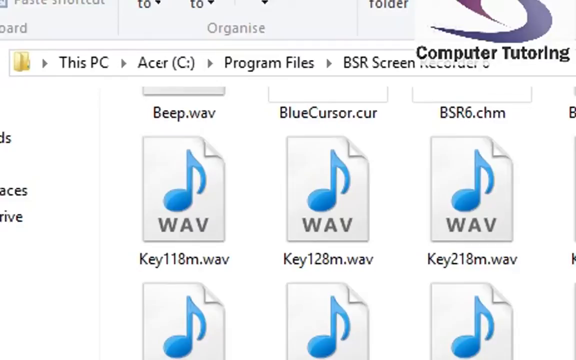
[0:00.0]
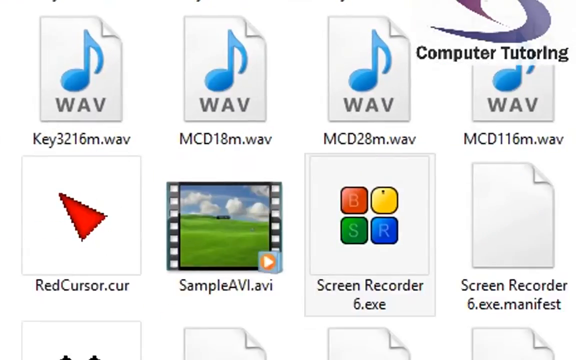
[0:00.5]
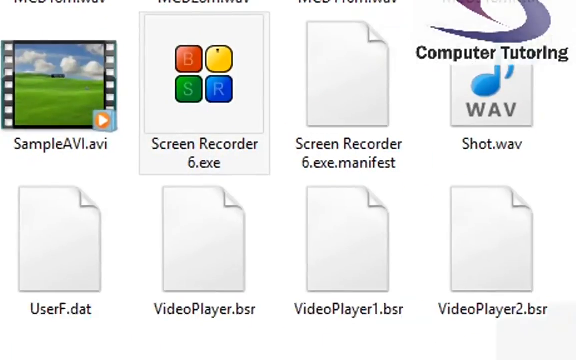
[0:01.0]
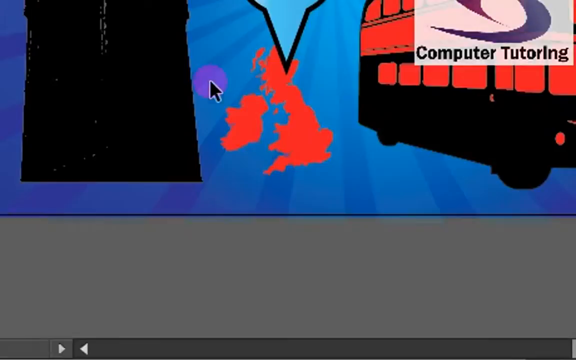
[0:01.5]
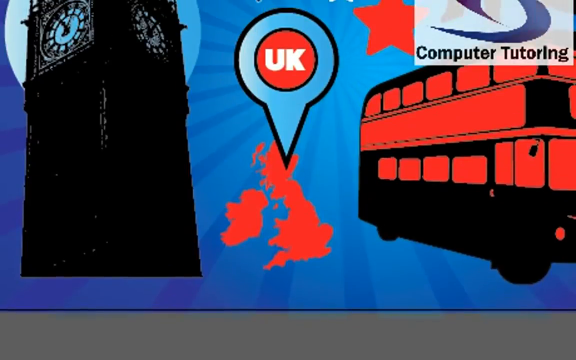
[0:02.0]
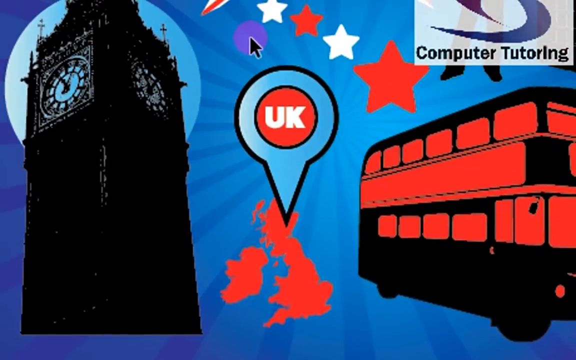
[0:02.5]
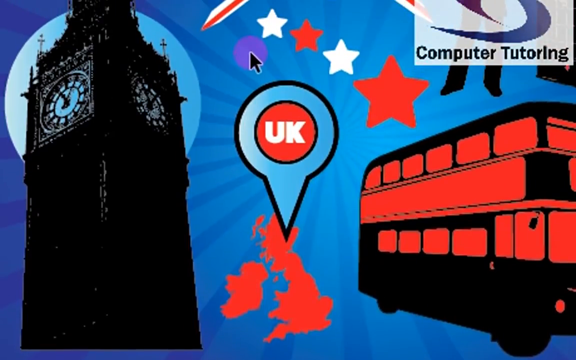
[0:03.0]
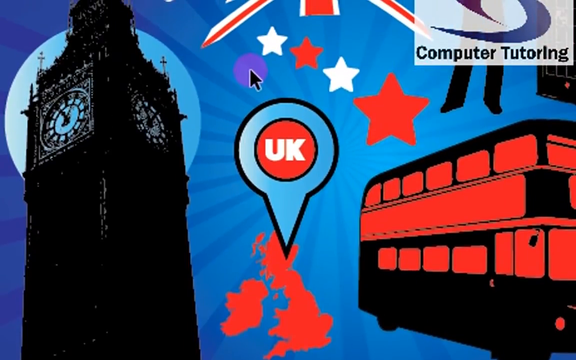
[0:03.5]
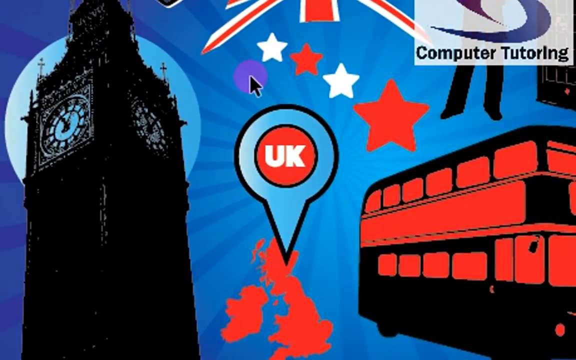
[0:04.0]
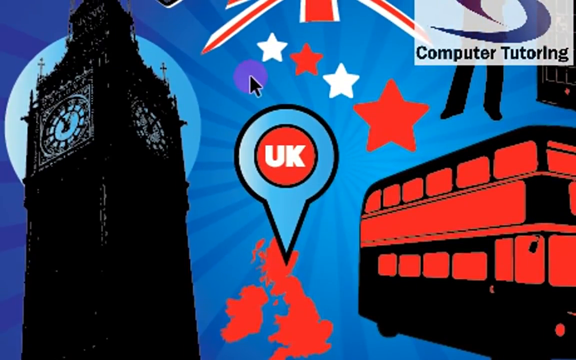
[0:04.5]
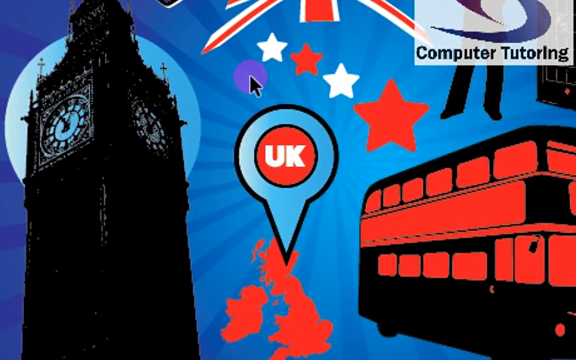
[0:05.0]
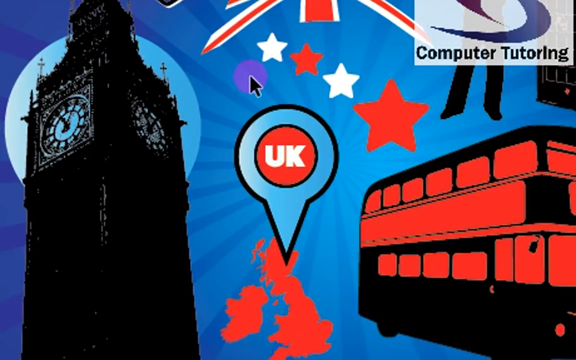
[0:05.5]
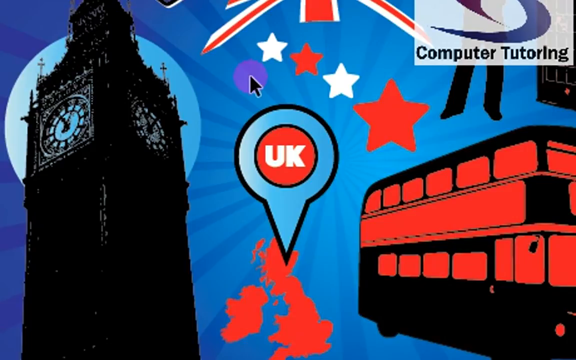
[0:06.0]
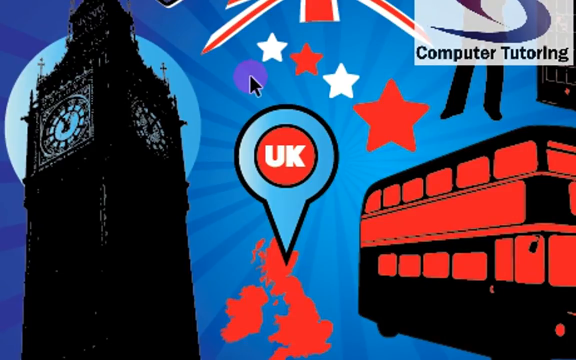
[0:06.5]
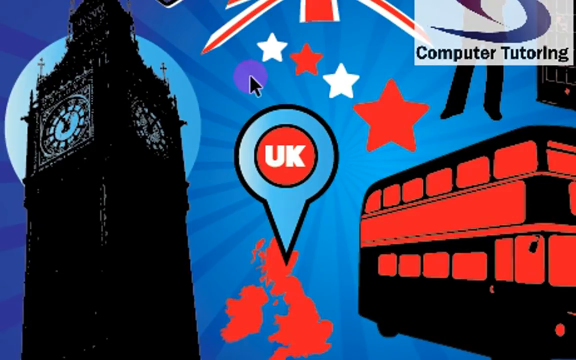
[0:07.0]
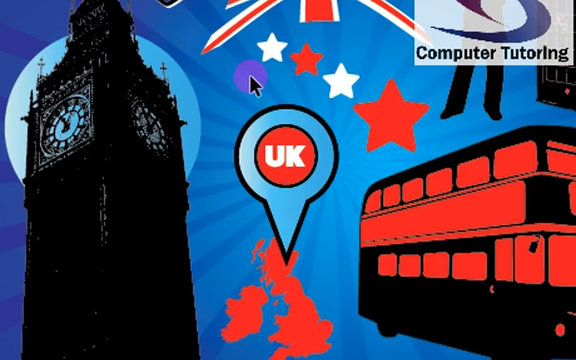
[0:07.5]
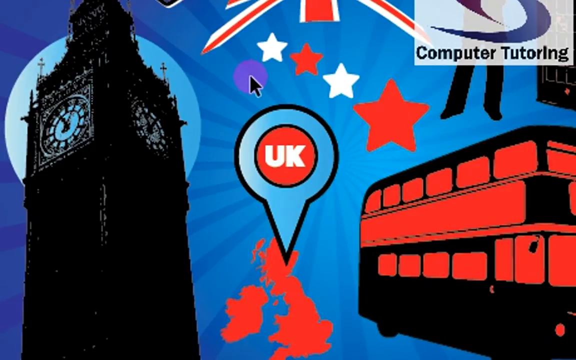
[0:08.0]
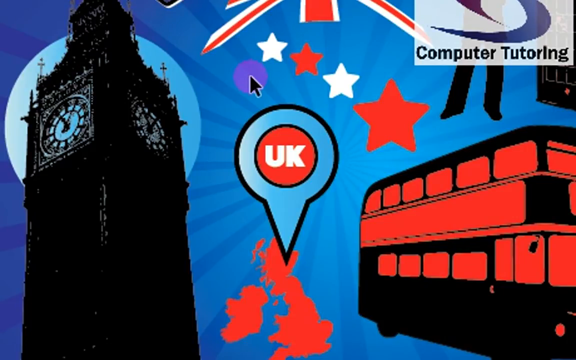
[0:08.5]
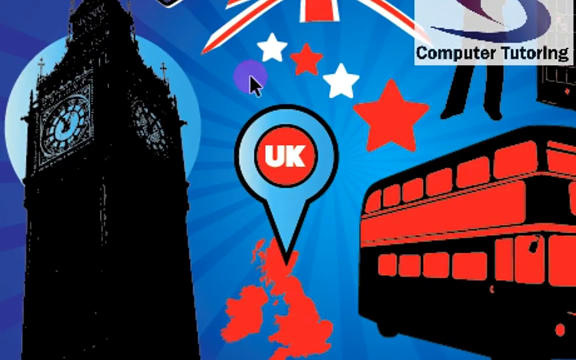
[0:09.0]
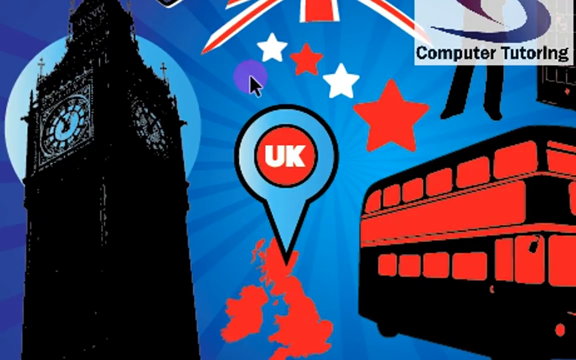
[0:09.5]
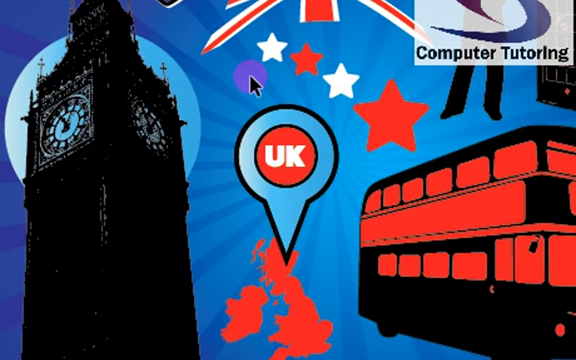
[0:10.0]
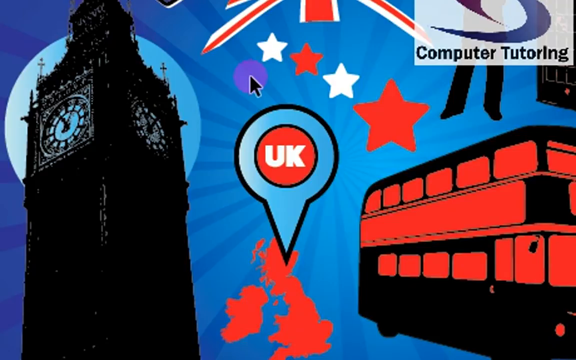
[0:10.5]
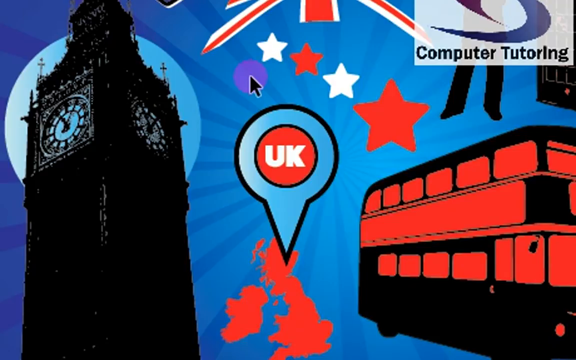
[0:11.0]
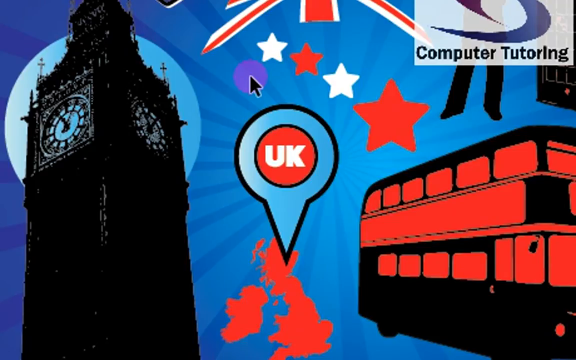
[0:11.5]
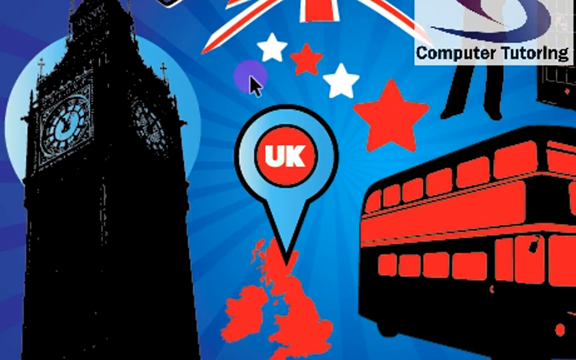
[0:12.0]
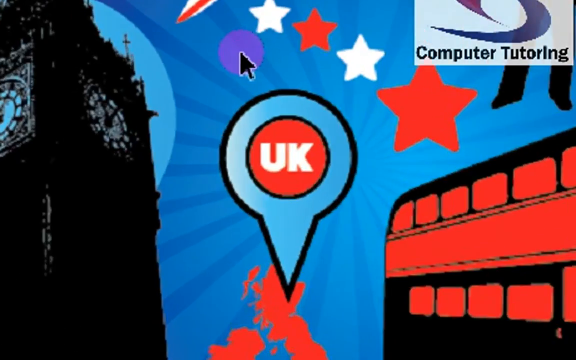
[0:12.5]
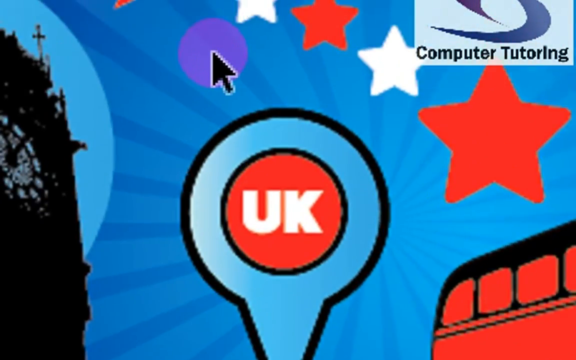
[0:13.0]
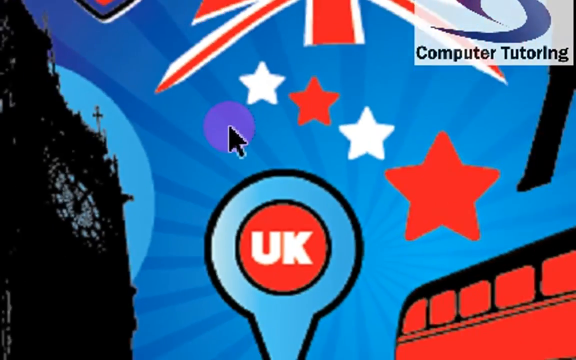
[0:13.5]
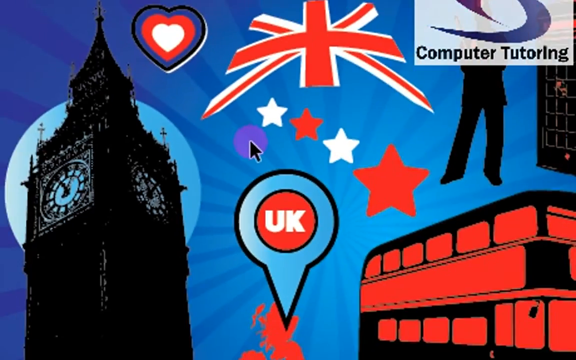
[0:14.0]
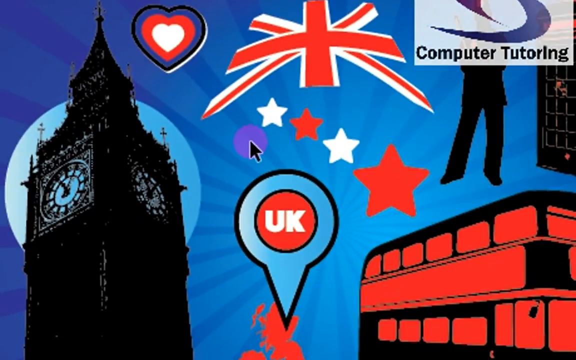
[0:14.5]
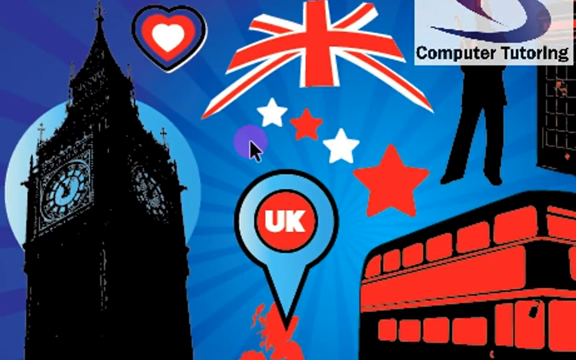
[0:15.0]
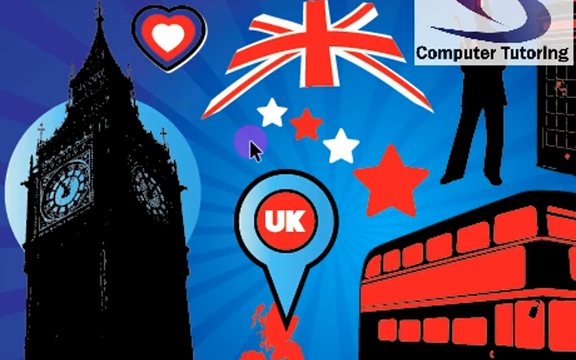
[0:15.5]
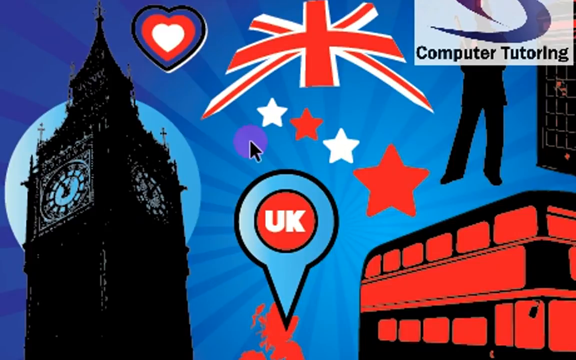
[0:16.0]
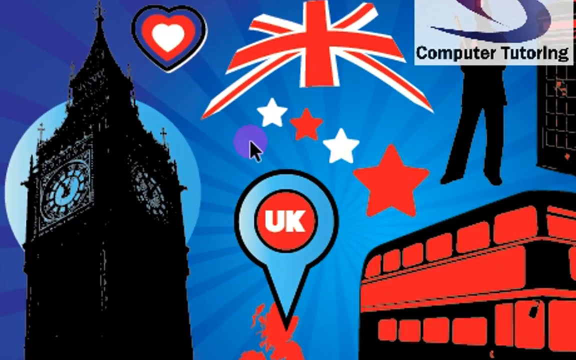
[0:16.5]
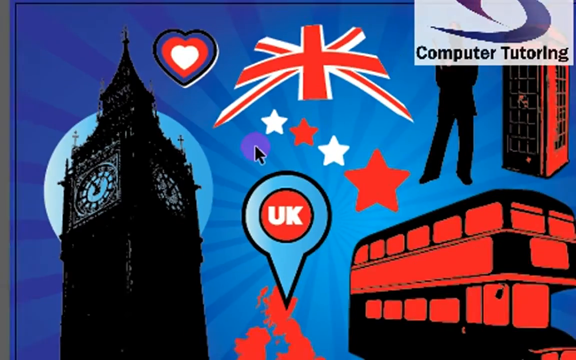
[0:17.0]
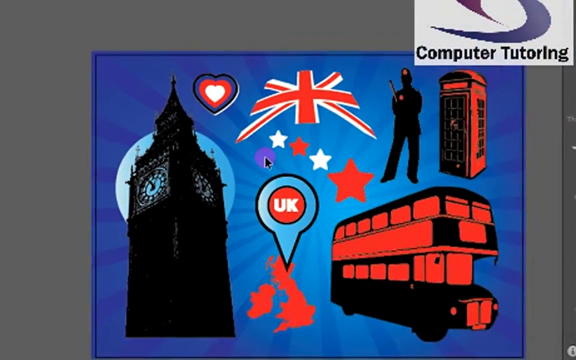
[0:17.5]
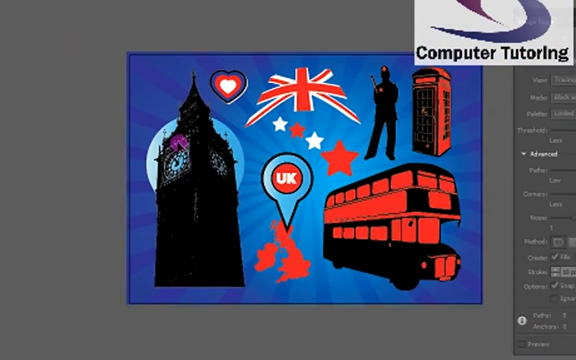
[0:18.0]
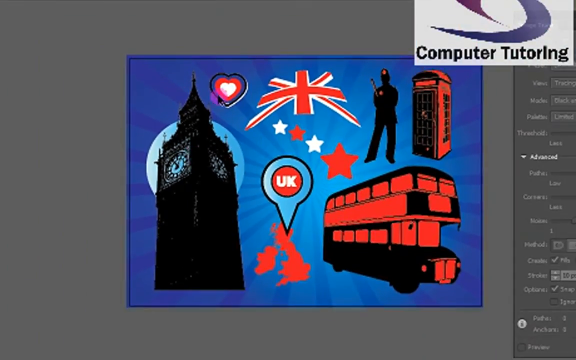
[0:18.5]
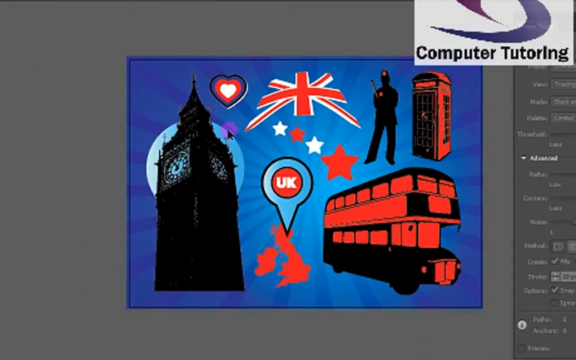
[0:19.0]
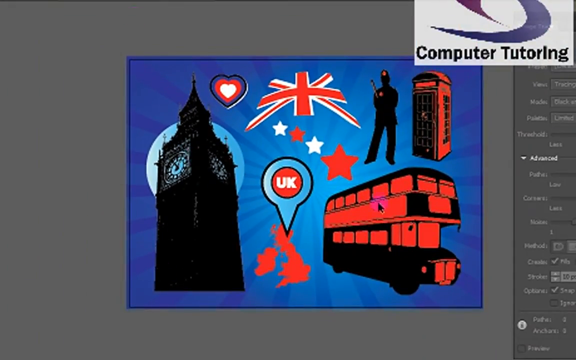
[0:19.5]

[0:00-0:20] Someone is doing computer tutoring; a logo in a small square is in the corner of the computer screen. They seem to be on some sound wave files, and the cursor hovers around and clicks on something, ending up on a picture with a blue background and kind of a starburst effect. On the left is Big Ben with a big bluish moon or circle behind it; the tower is completely black except that one clock face on the left is blue and the one on the right is gray. There is a map of the UK in red with a locator symbol on Scotland. A bunch of stars come out of a Union Jack flag, colored white, red, white, red; the ones on the left are small and the red one on the right is big. There is one purple circle, with the cursor on it, just to the left of and below the white star. Next there is a red and black double-decker bus, and what looks like the legs of somebody coming down in black, with the upper part not visible, and maybe a building to the right. The view focuses close up on the UK symbol, then goes back out. A heart with concentric hearts is to the left of the Union Jack.